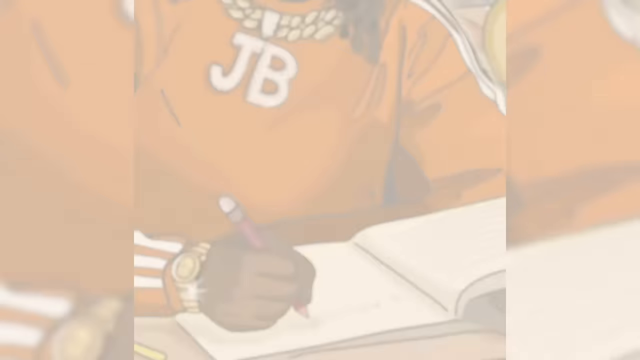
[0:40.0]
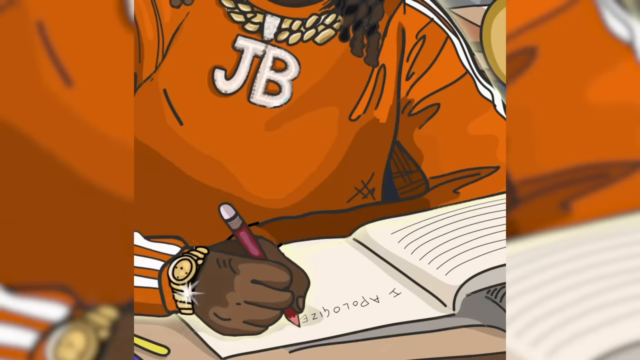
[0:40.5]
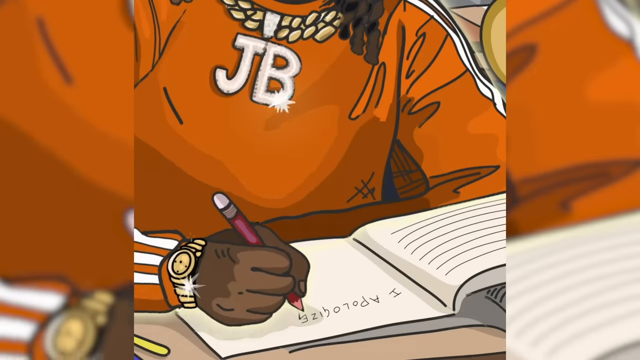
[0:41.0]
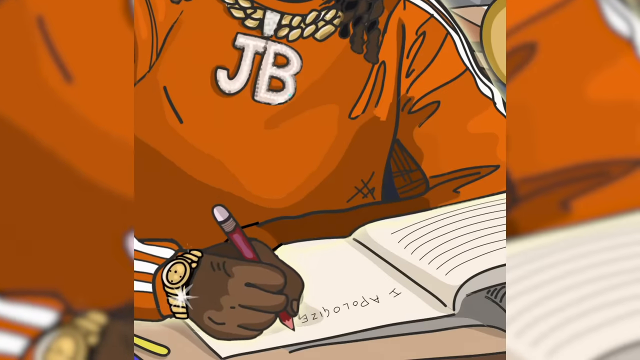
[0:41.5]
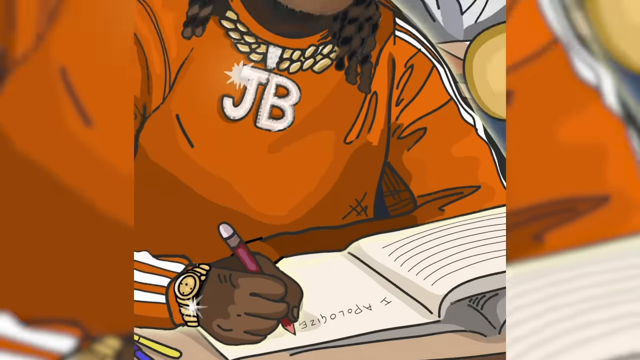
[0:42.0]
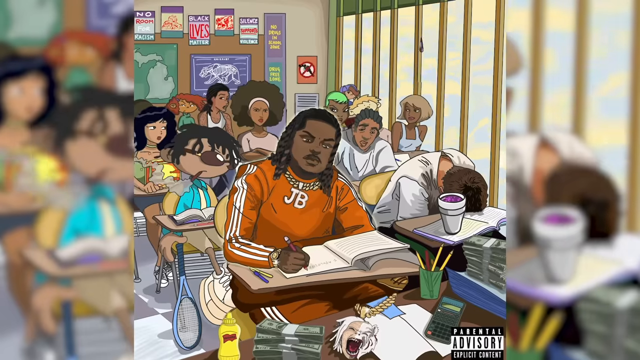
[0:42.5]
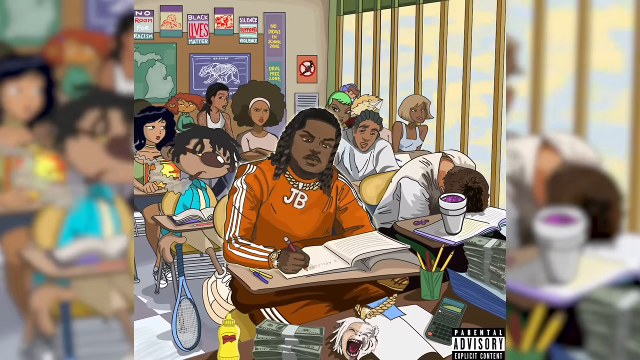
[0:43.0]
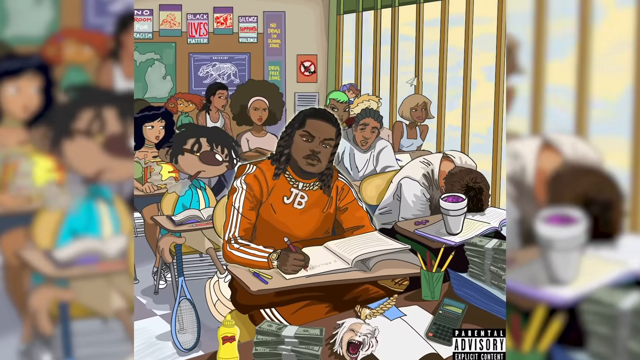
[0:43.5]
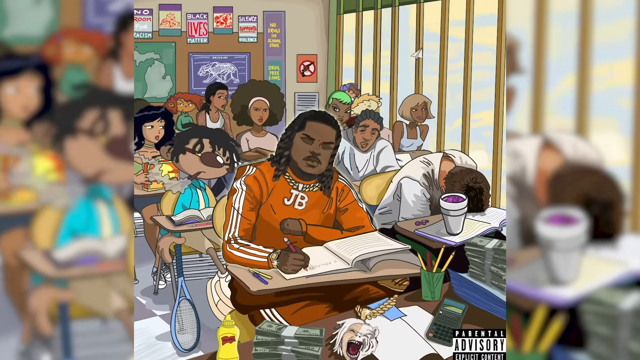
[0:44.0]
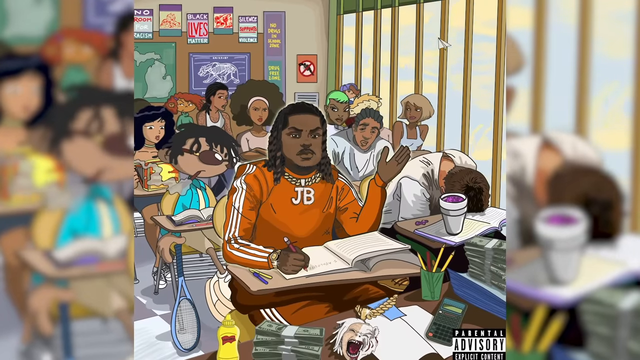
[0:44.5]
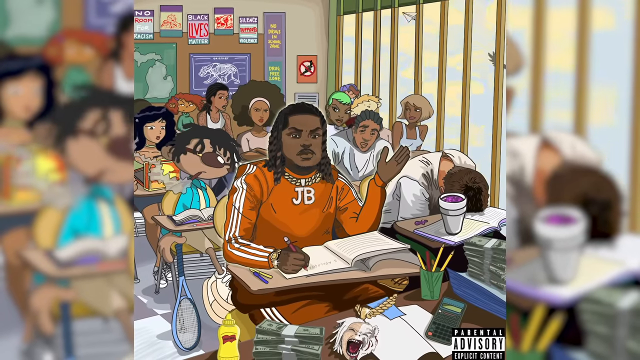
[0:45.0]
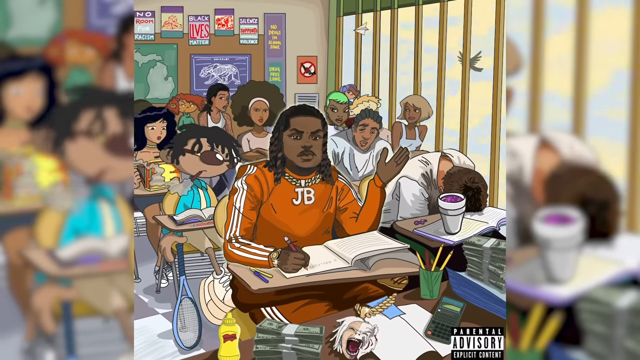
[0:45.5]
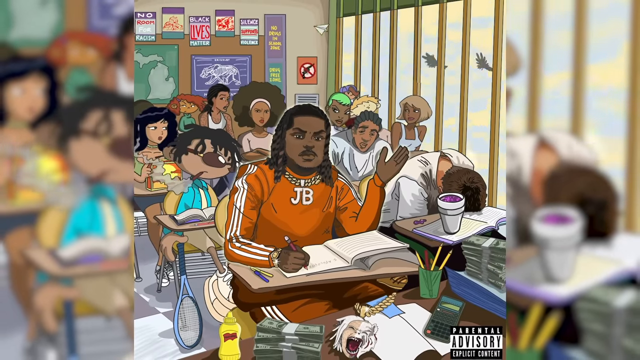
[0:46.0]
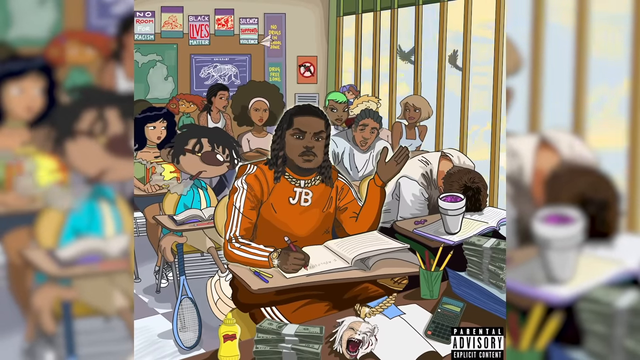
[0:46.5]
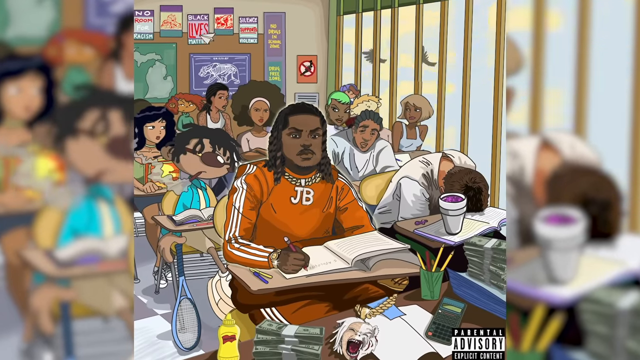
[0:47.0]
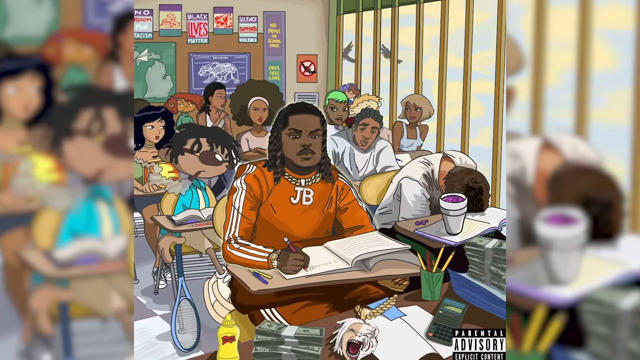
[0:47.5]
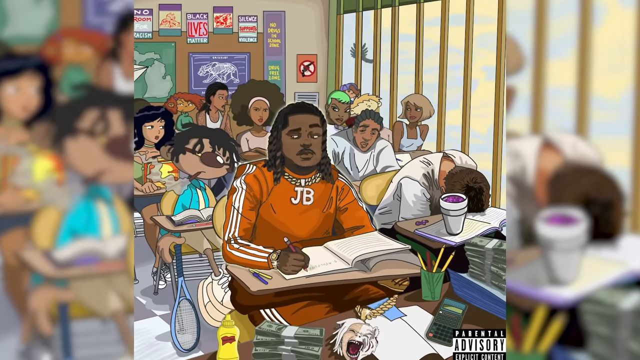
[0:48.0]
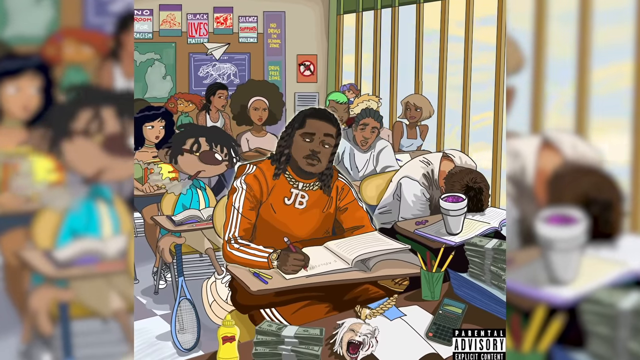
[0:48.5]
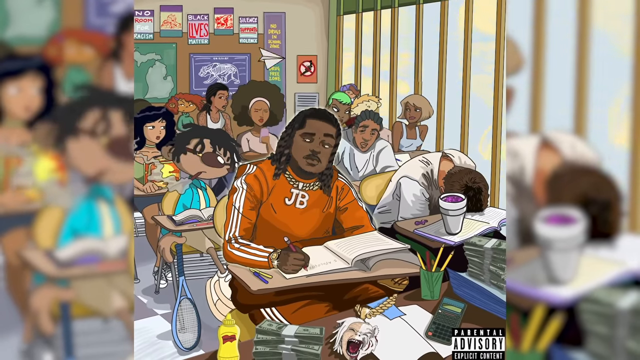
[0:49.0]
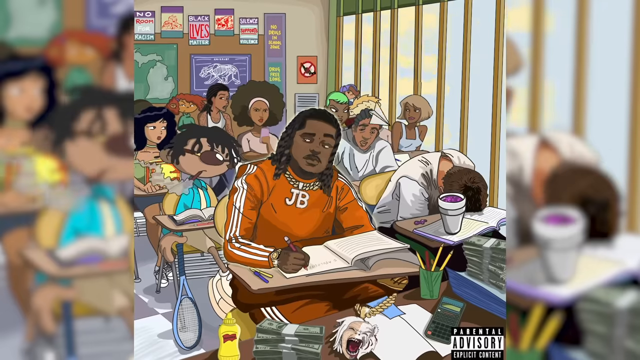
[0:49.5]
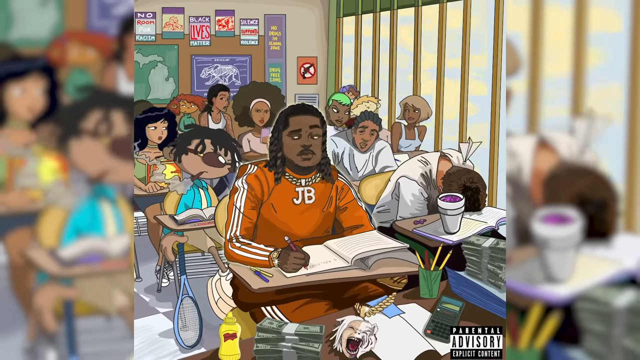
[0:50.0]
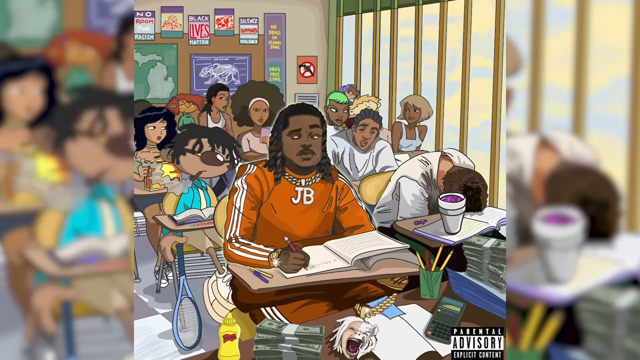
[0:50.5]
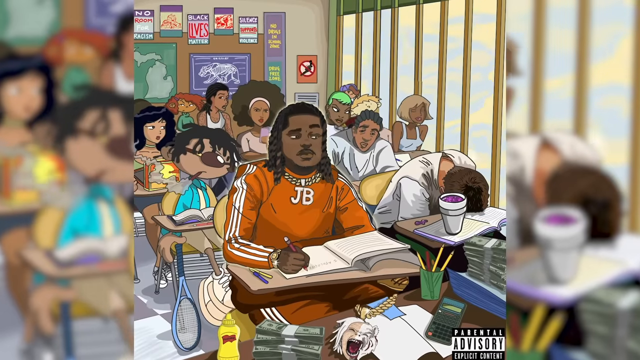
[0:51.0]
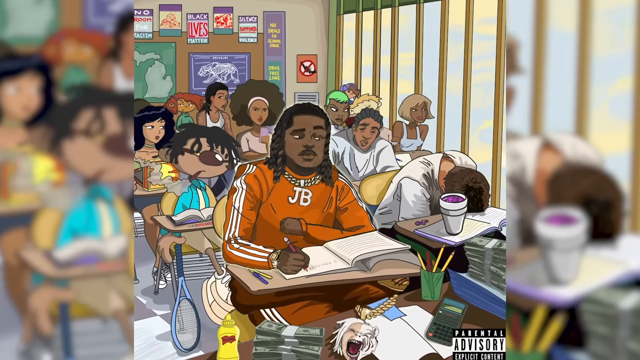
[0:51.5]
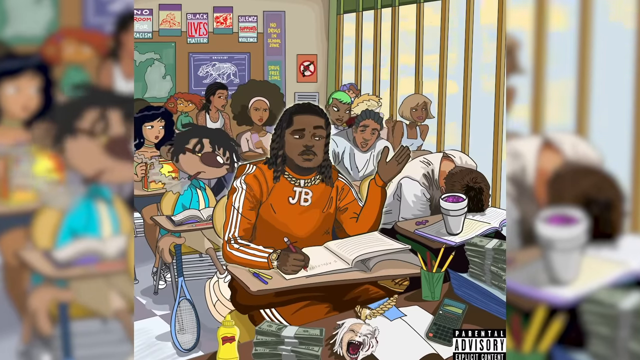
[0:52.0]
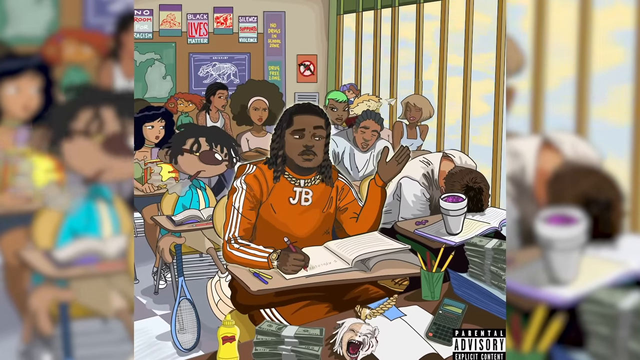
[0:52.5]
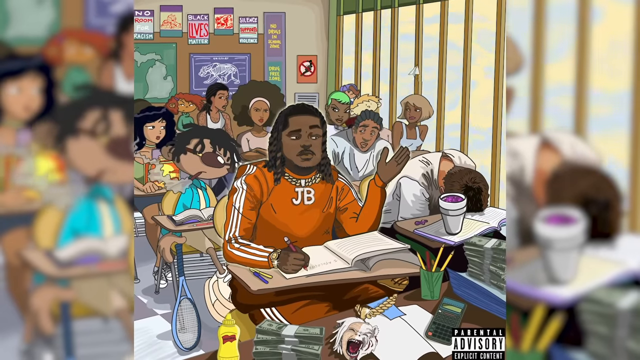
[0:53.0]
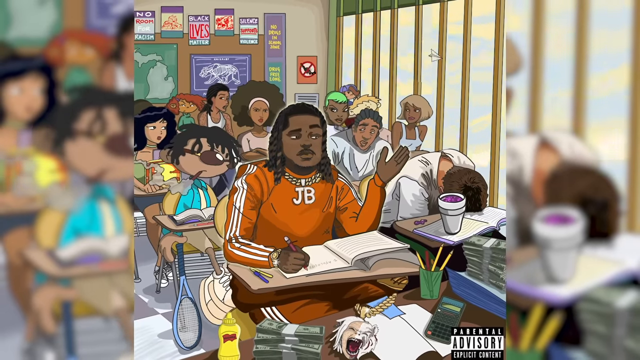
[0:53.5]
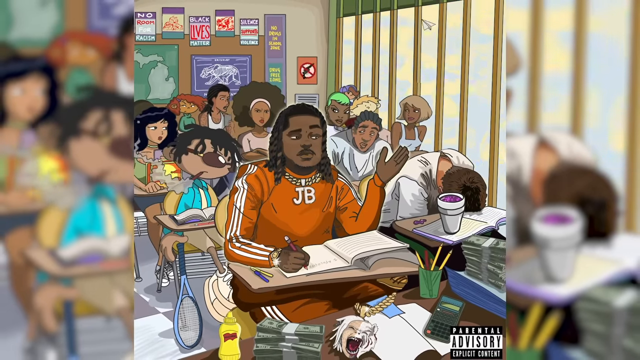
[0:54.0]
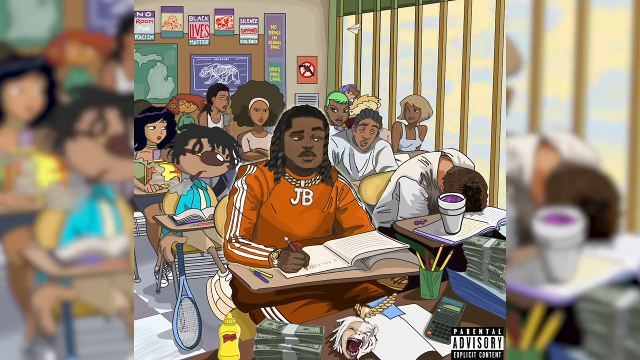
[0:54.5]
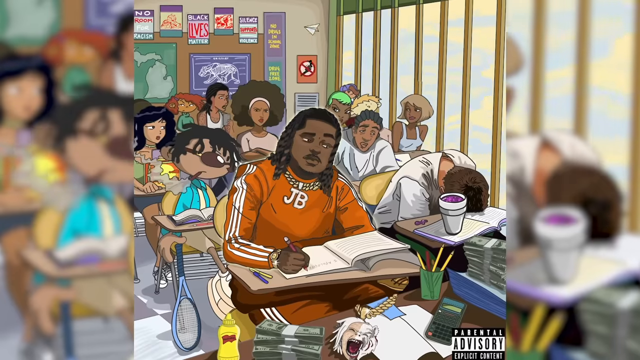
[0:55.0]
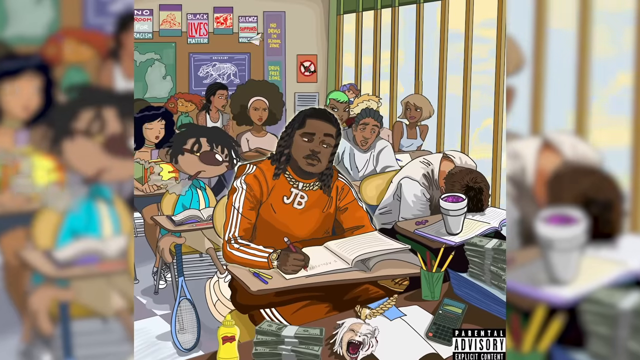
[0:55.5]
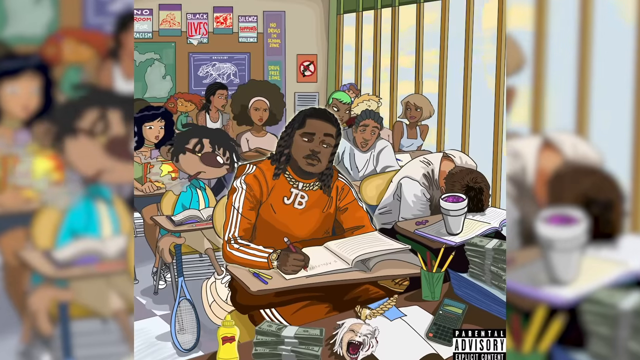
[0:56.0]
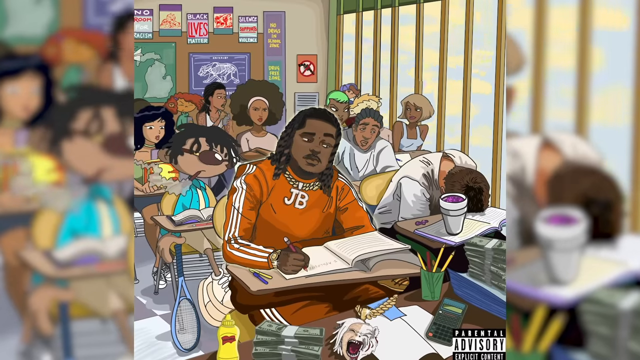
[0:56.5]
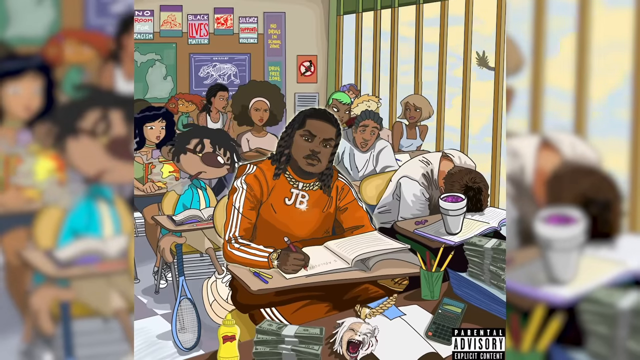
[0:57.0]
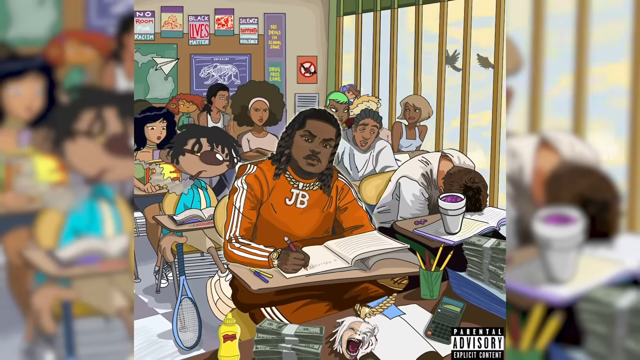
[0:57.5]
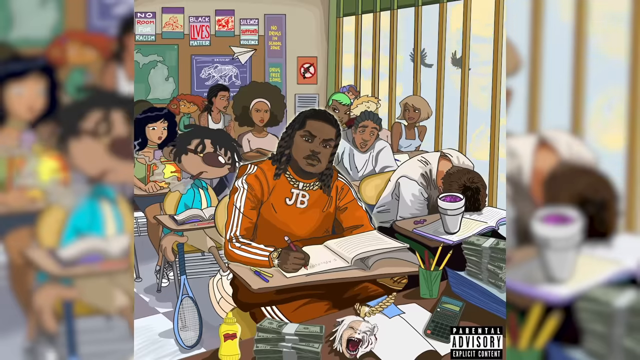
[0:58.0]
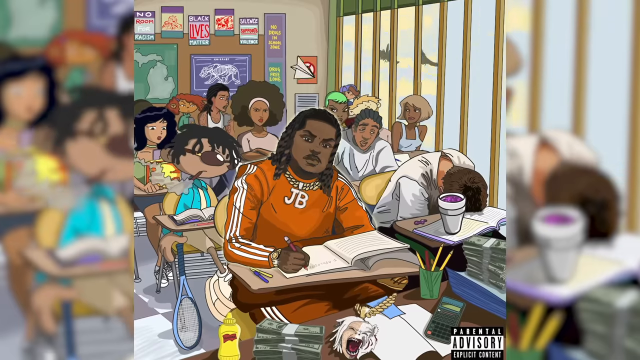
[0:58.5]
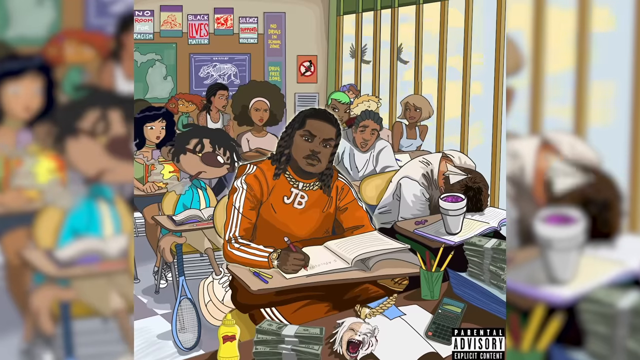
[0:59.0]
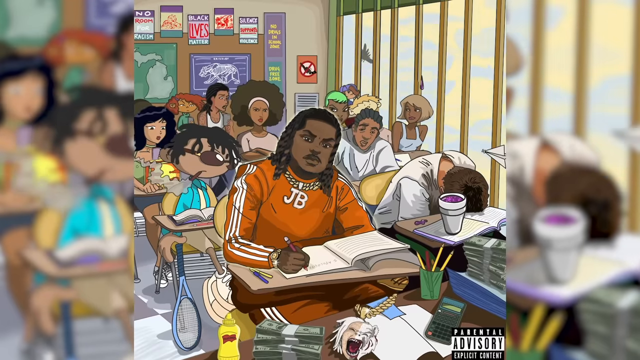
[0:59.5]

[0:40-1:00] JB keeps writing, at times putting his hand up and taking it right back down, repeating the motion. He looks around, taking in everything in the class. At one point he stares into space with an almost confused look and a small frown, then puts his hand back down. On the right side of the classroom is a window with bars on it and possibly a green drape at the top, and doves constantly fly around outside. There is a lot of yellow in that part of the scene, apparently representing sunlight shining into the classroom. Everyone else is still sitting around half asleep, nodding their heads and being quiet; no one is seen talking. The other guy is still knocked out. The teacher's desk holds cash money, a calculator, a small booklet and a pencil jar full of pencils.